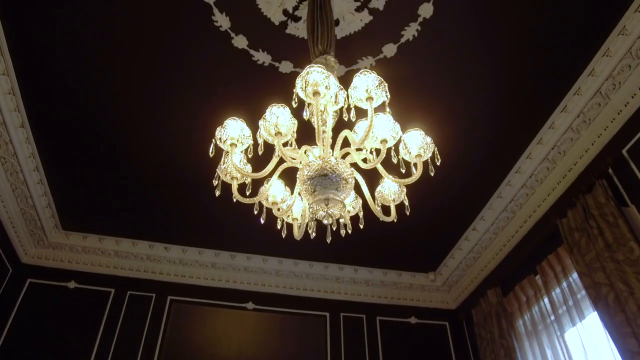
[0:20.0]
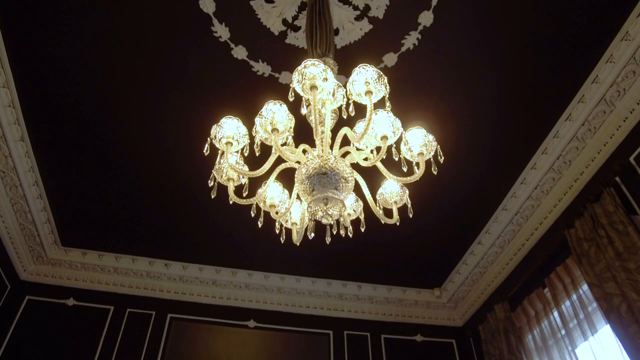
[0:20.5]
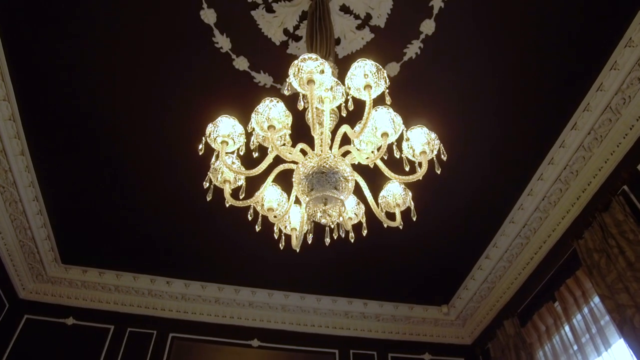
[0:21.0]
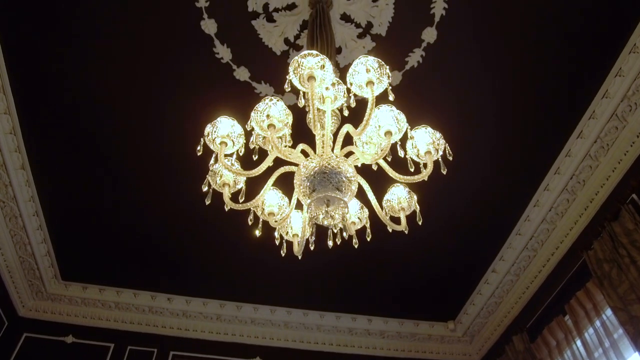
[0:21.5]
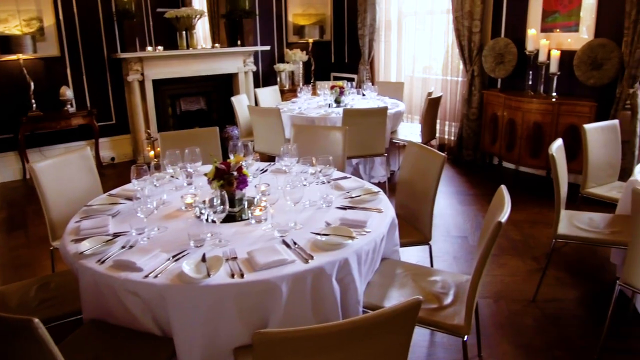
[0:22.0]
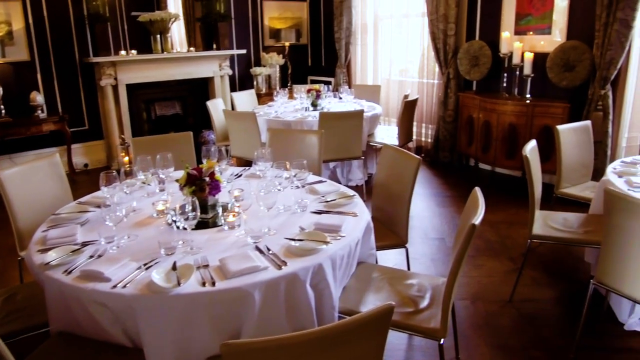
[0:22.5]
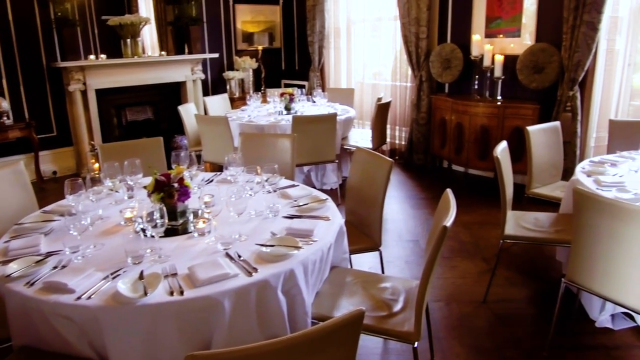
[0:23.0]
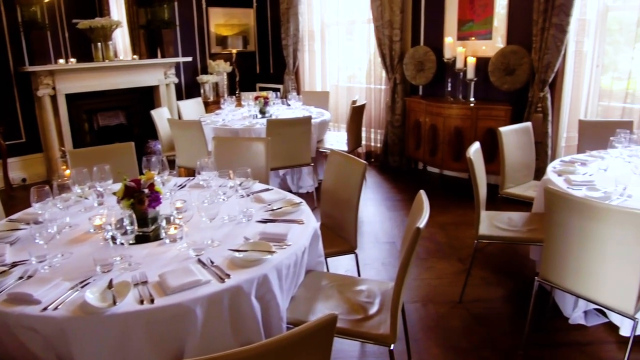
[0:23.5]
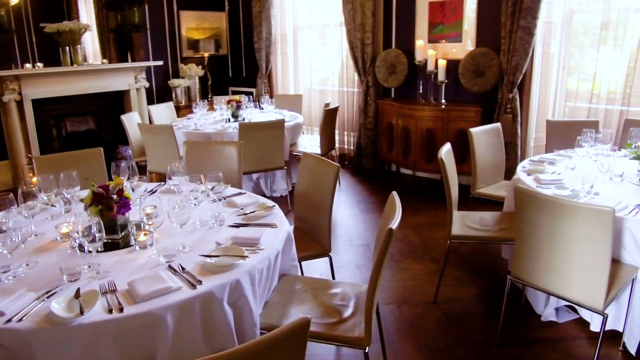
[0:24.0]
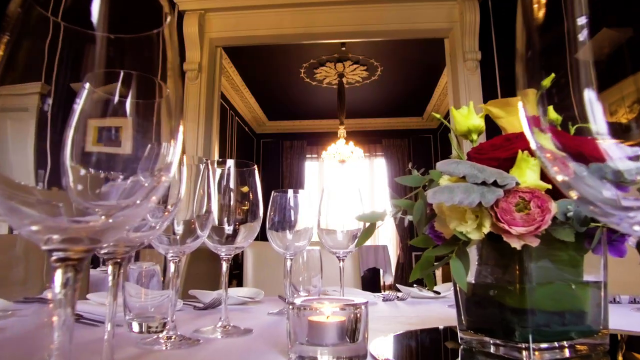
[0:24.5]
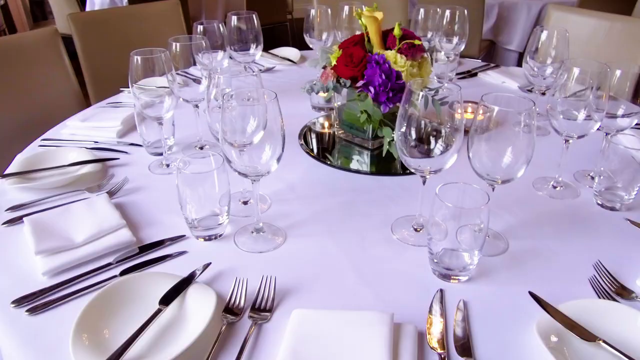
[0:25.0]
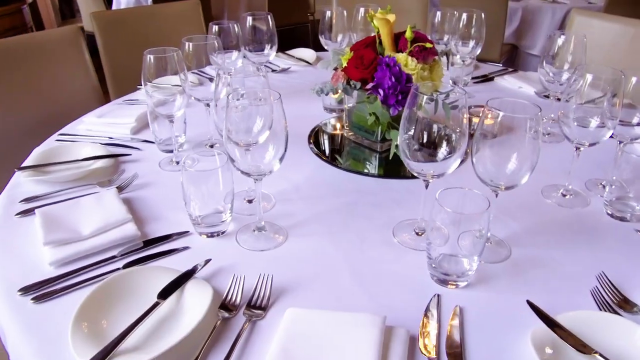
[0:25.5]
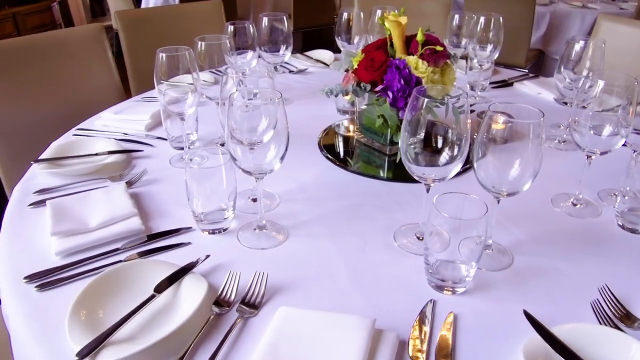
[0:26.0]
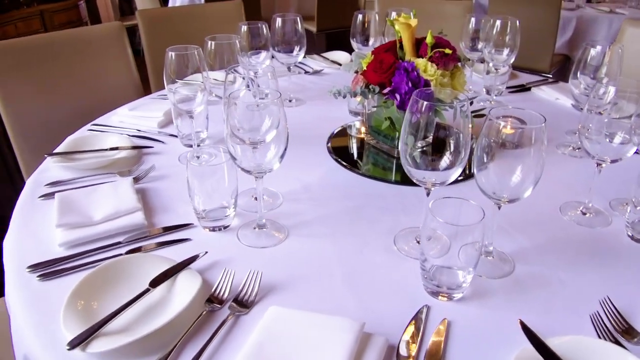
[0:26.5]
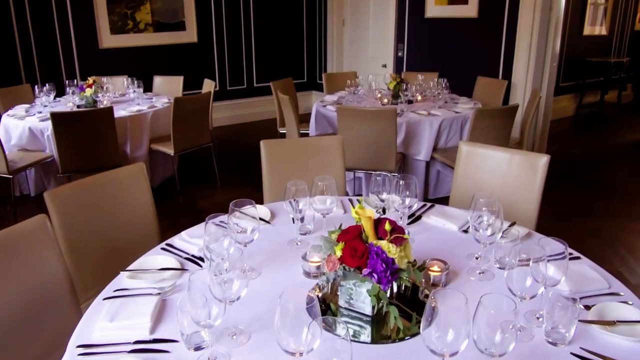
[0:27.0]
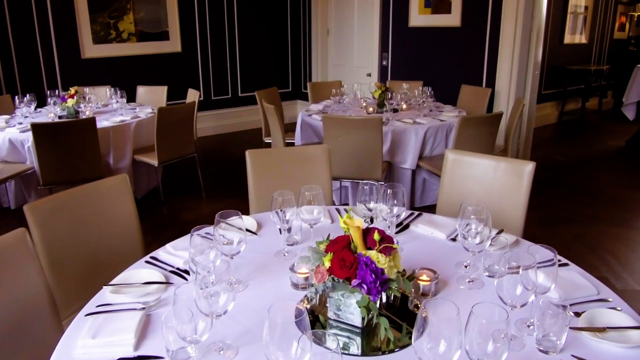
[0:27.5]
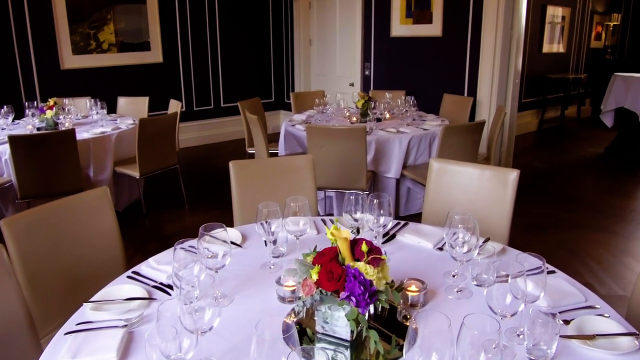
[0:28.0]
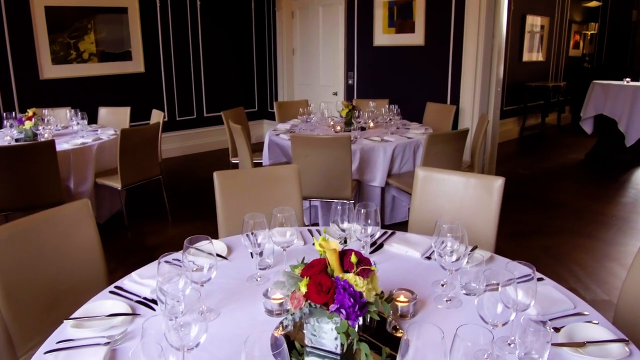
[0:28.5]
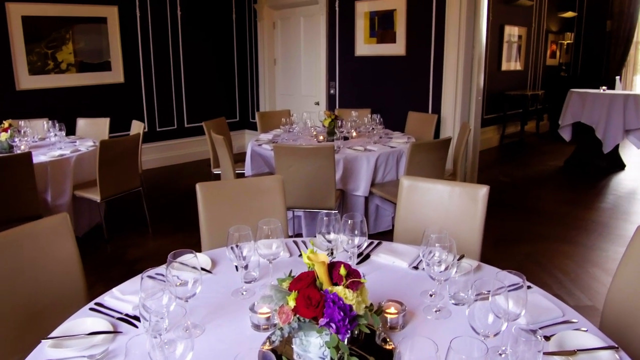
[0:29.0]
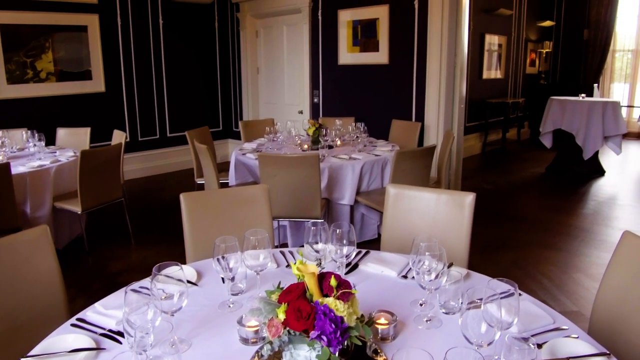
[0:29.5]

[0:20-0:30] A chandelier is shown, and the interior appears to contain multiple dining room tables. Rather than a home for sale, the place seems to be somewhere to visit and stay, possibly a resort or a historic hotel that looks like it has been around for a long time and been restored. It is very fancy, with chandeliers everywhere and wine glasses on a round table where many people can sit.